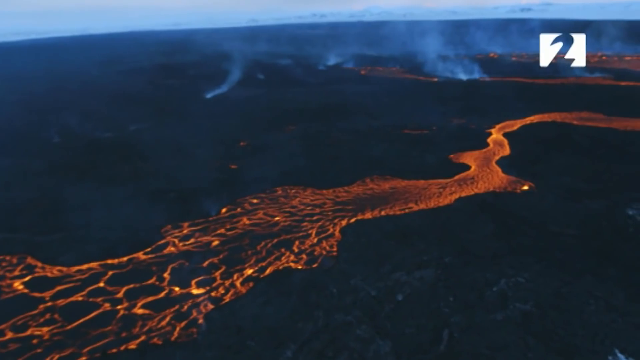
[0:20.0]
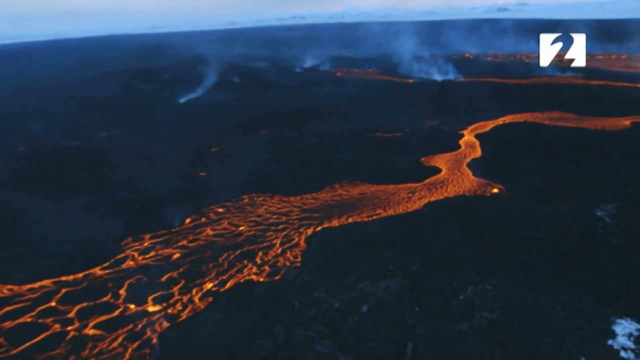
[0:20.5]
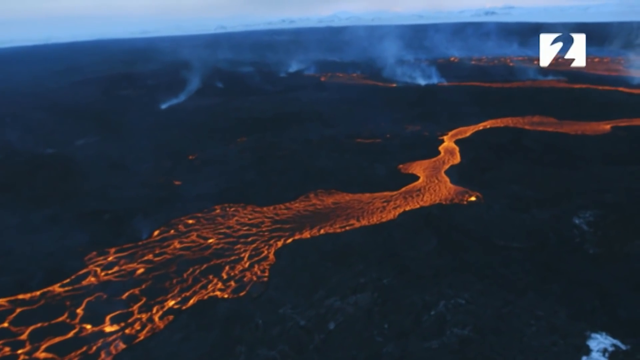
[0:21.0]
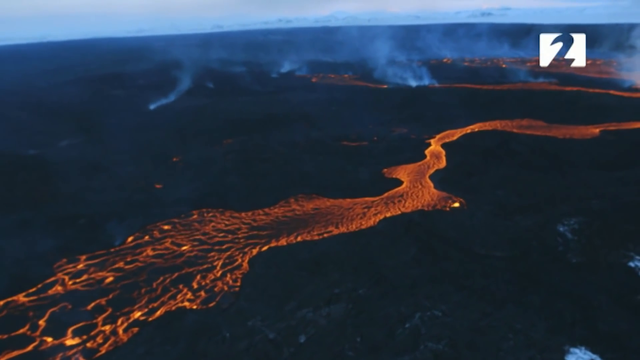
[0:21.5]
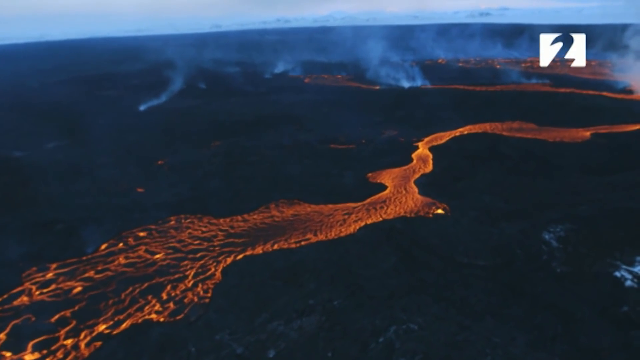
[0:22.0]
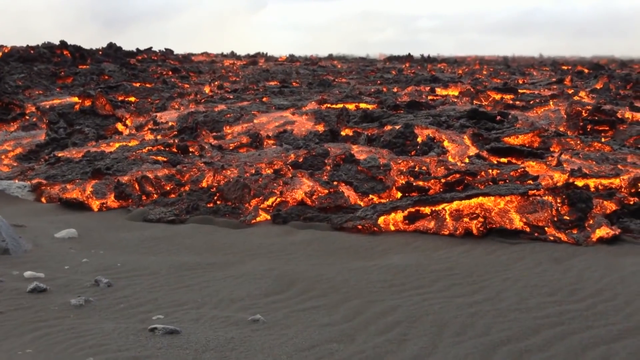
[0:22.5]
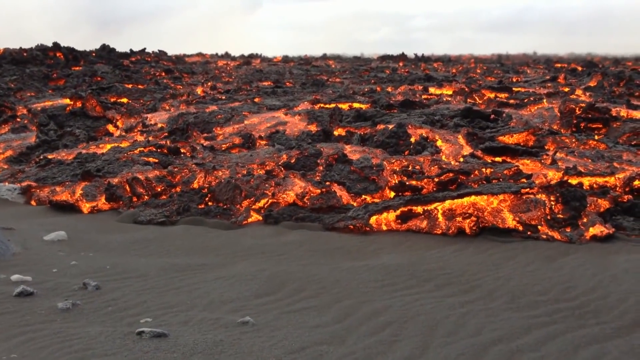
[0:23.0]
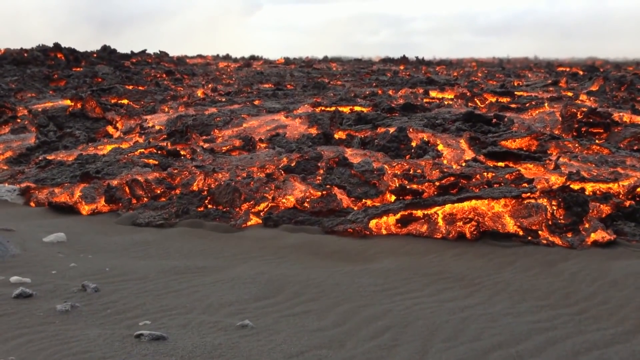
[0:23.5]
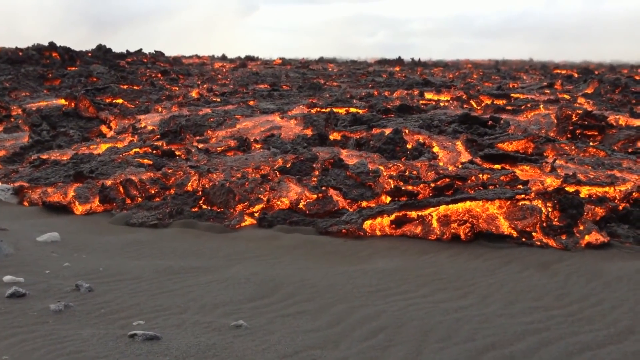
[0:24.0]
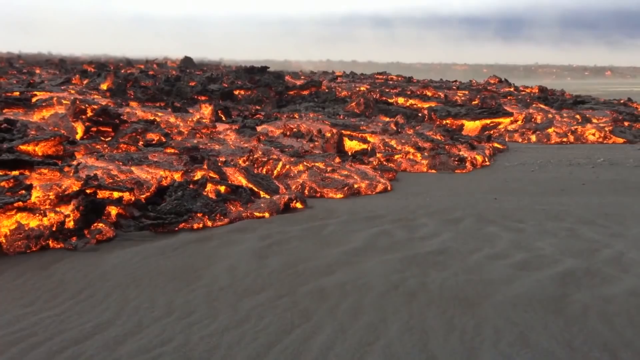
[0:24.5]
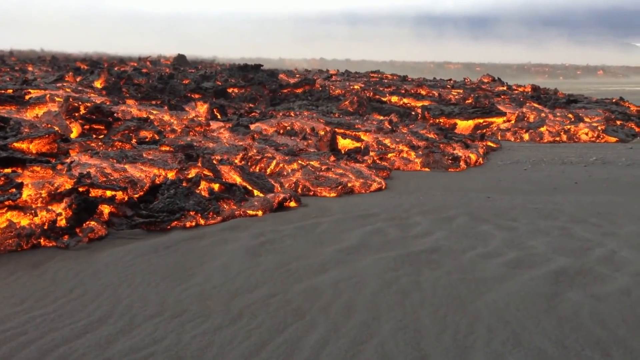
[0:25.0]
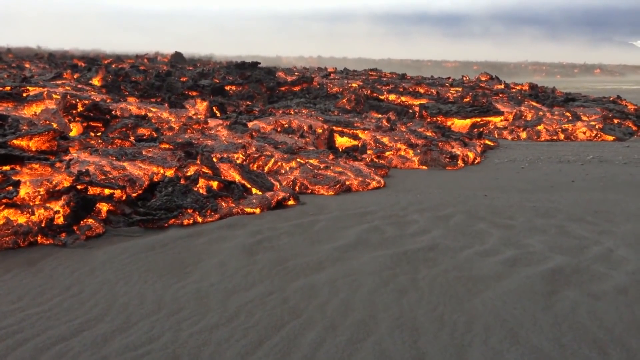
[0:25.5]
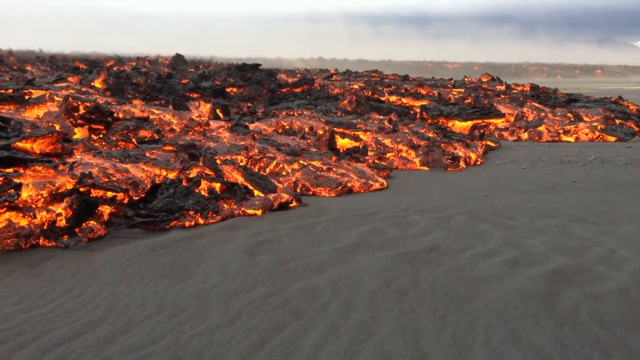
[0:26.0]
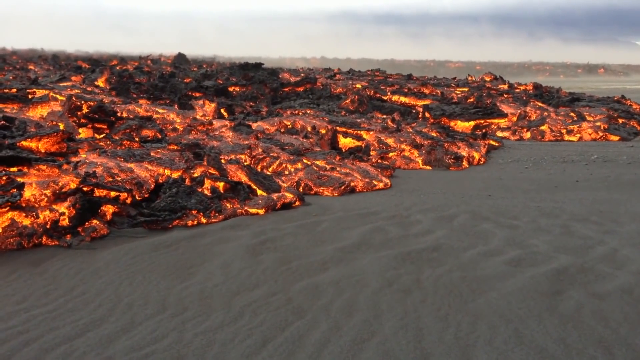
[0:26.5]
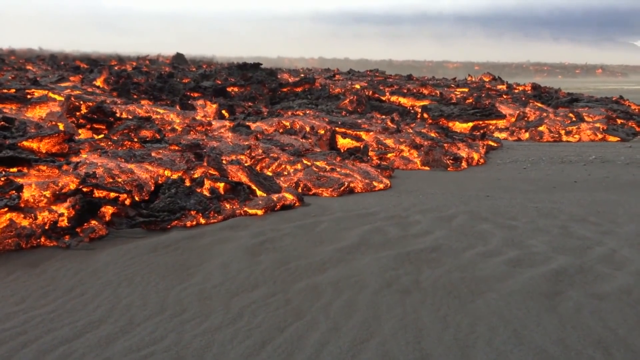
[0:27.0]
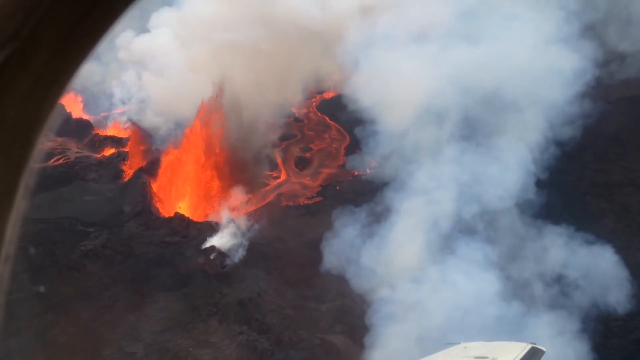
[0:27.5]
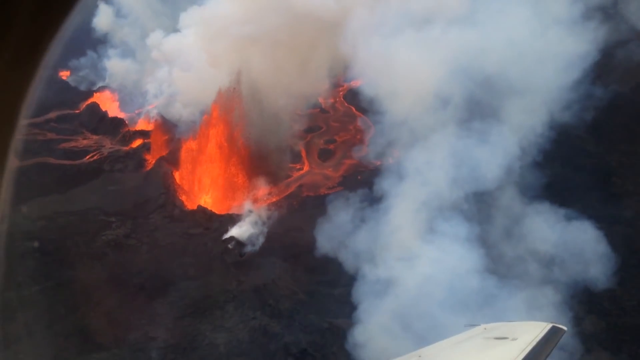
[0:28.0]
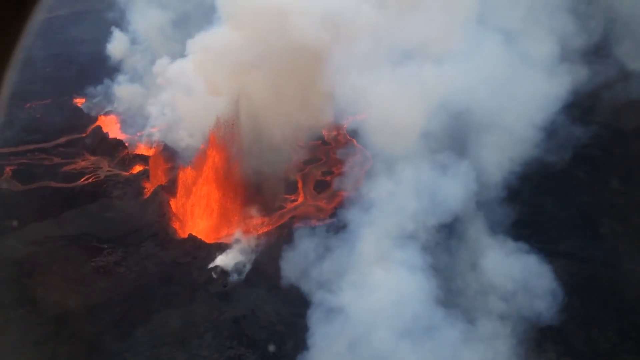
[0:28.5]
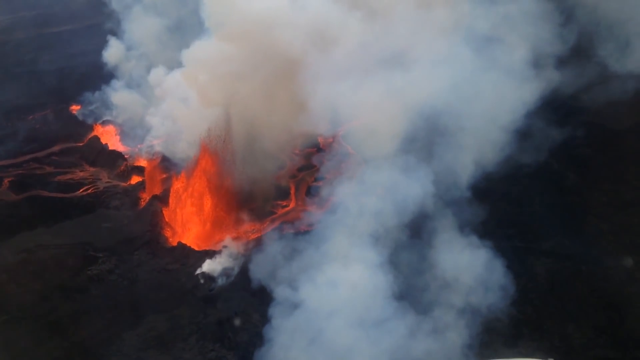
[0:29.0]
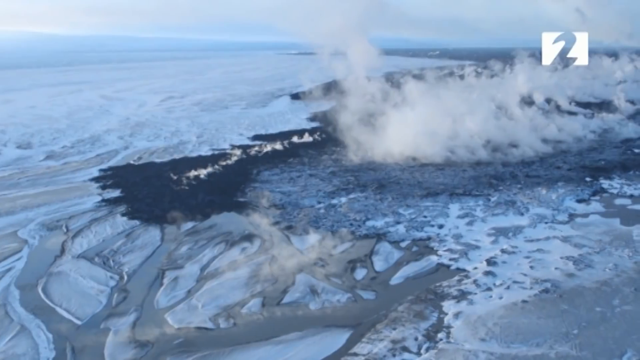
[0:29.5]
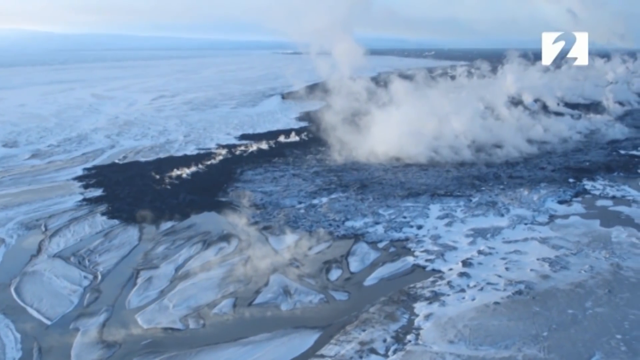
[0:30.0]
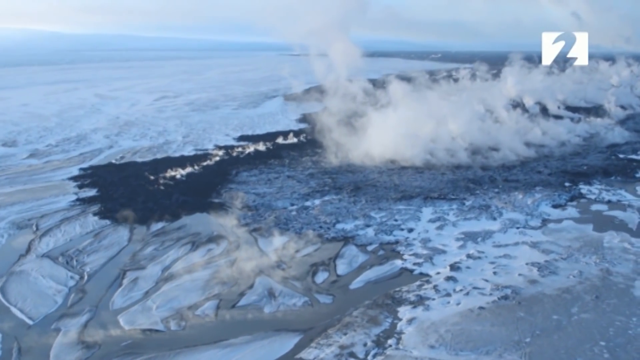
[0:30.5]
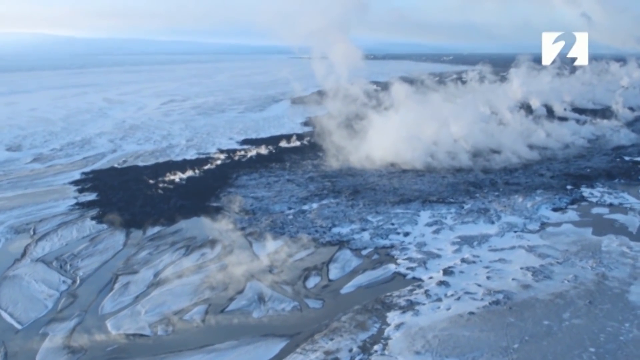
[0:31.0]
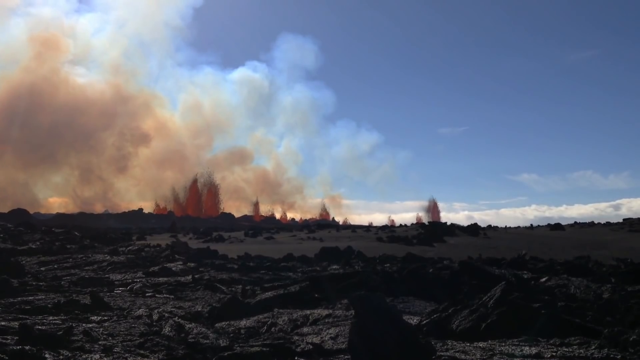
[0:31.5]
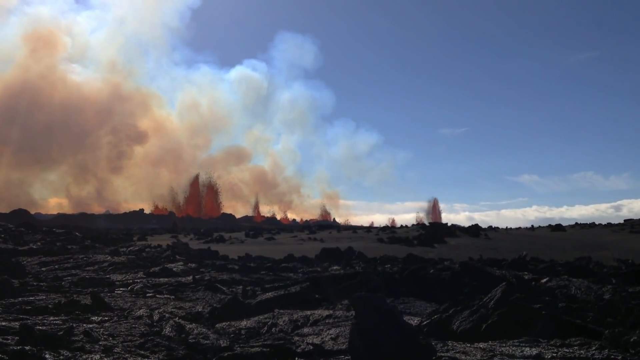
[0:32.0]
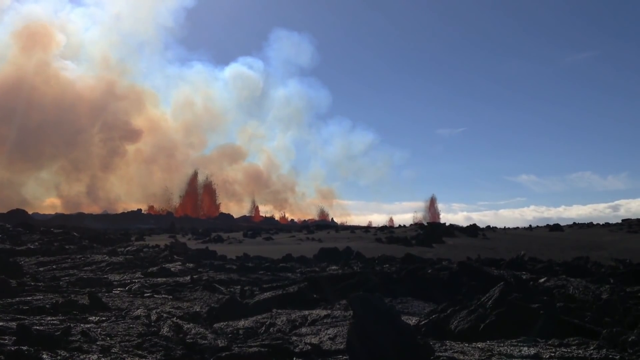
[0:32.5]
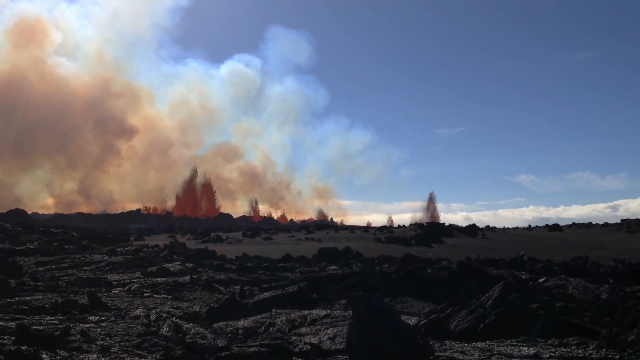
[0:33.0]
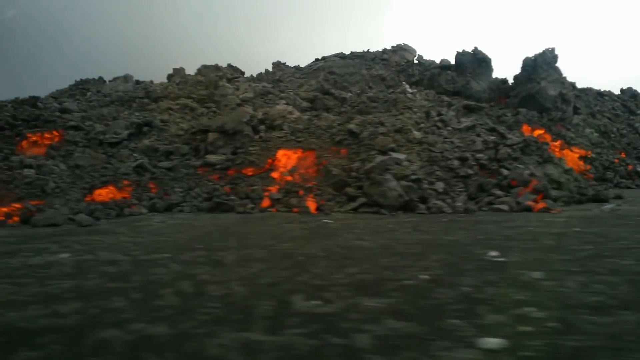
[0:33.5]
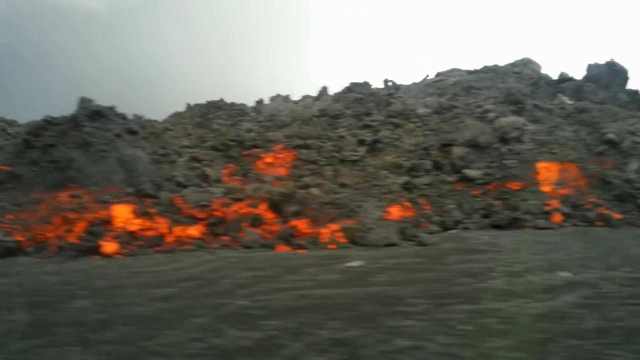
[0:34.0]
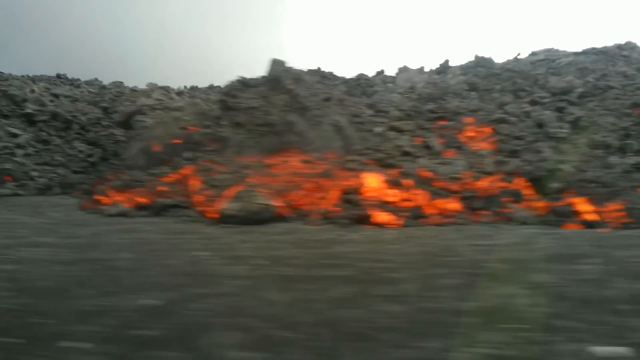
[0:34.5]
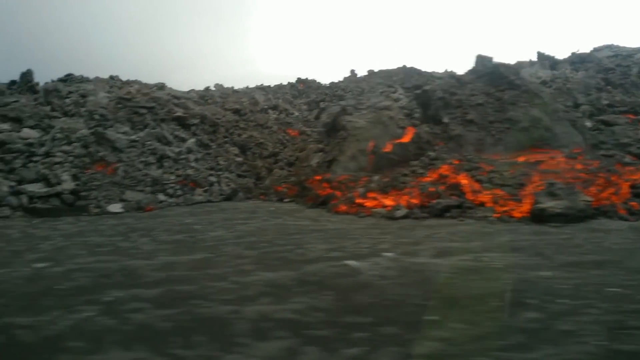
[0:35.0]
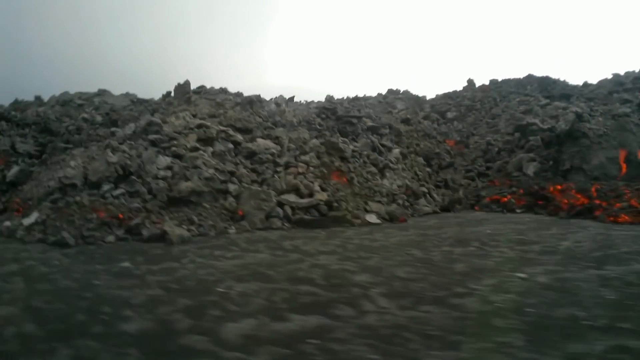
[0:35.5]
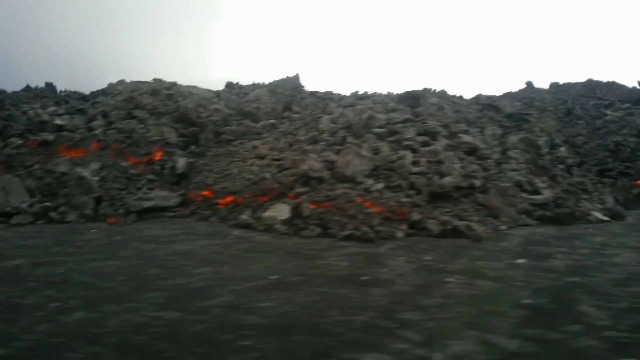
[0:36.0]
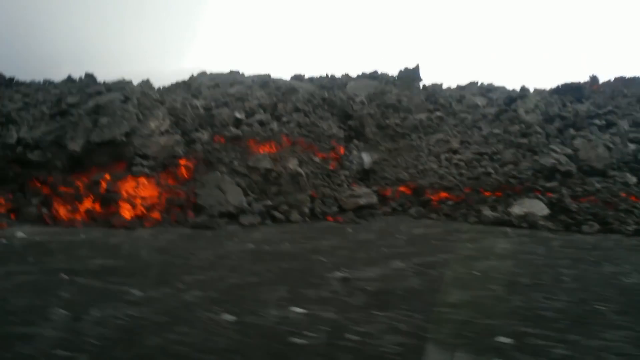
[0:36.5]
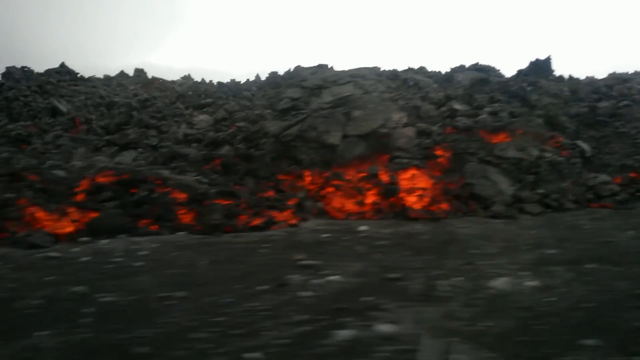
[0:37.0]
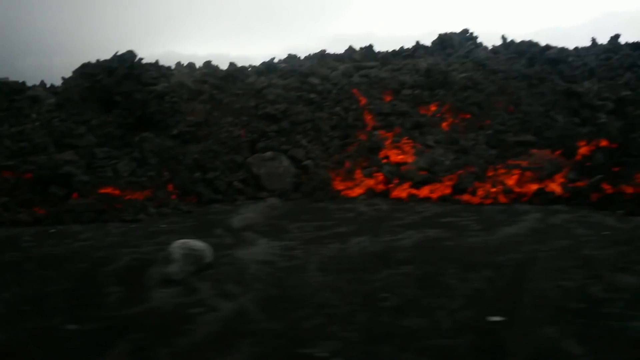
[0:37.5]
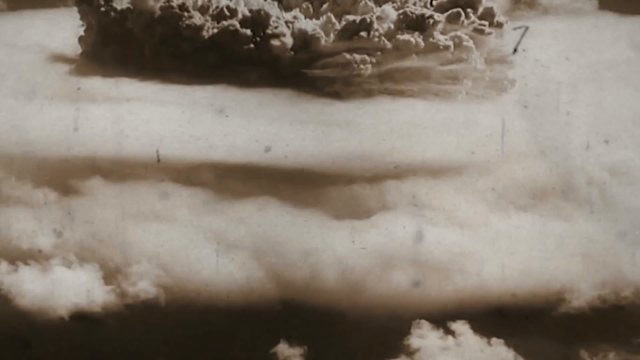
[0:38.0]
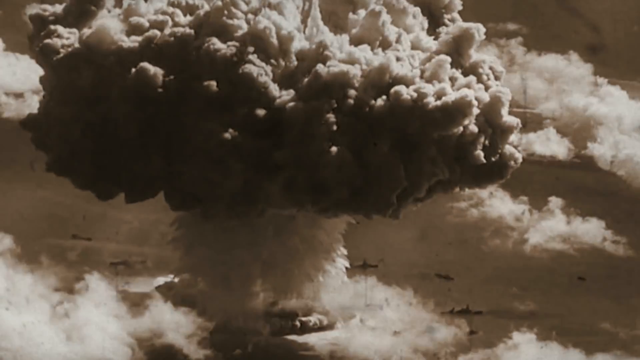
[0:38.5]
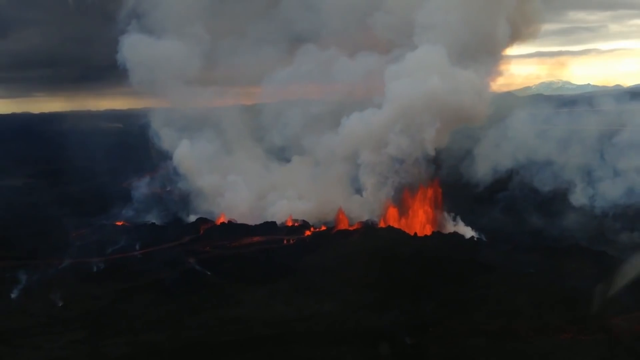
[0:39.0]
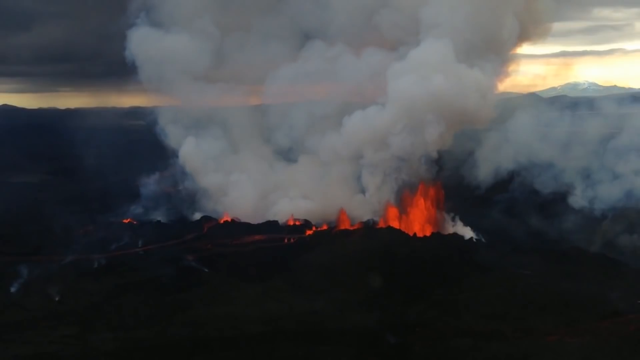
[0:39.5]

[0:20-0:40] A river of lava runs over the black mountaintop, with smoke coming out from behind it. The camera is zoomed onto the valley, where everything is covered in lava. An aerial view shows flames and white smoke; the camera is trembling and appears to be inside a helicopter. The view is then on the mountaintop, which is covered in a white substance, with white smoke coming from the ground. A valley view shows dark ground with some trees and a lot of smoke in the background. The camera fast-forwards through all the debris the lava has left, and smoking lava is still visible: a dark, dirty ground with the red colors of smoking lava. The camera then shows what appears to be an explosion, probably the volcano at the moment it was exploding. The final image is a view of the flaming lava and smoke from on top.